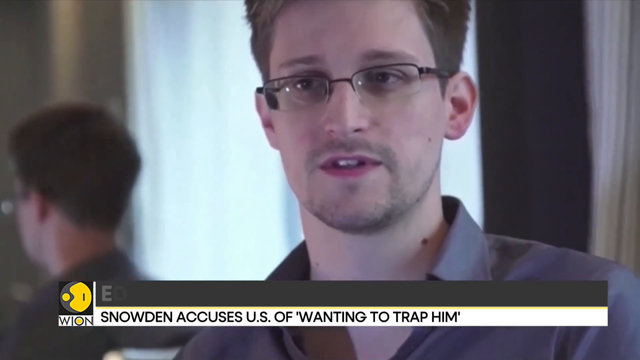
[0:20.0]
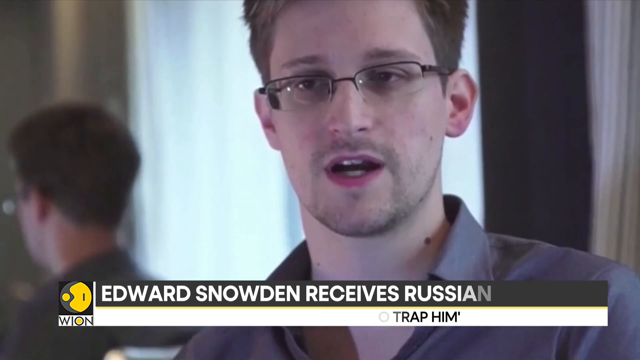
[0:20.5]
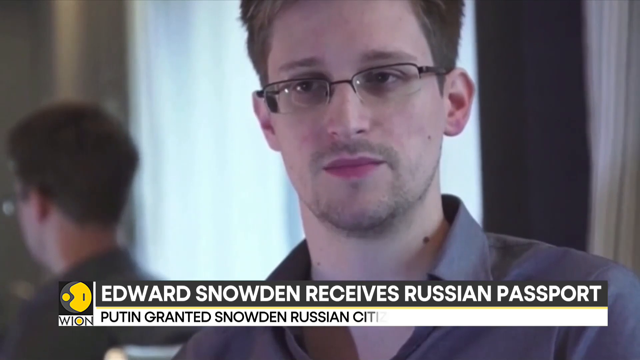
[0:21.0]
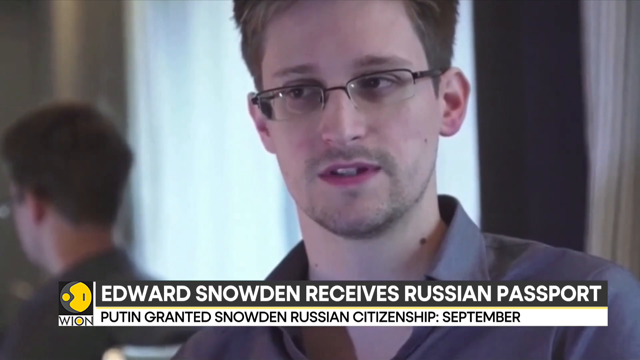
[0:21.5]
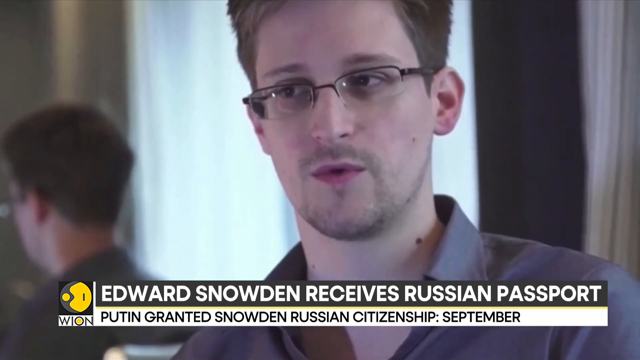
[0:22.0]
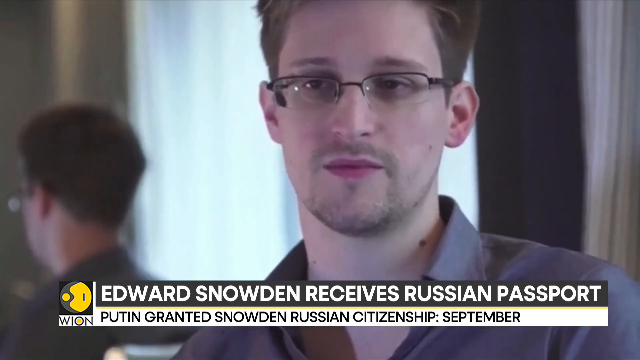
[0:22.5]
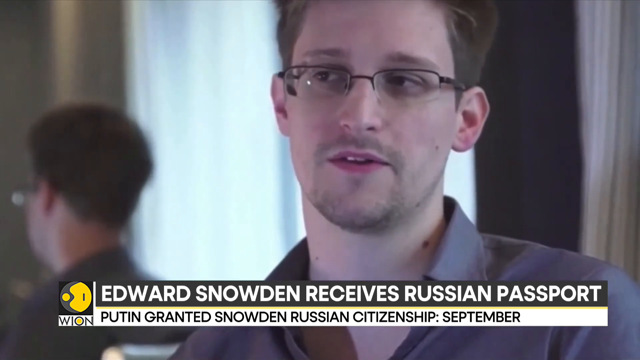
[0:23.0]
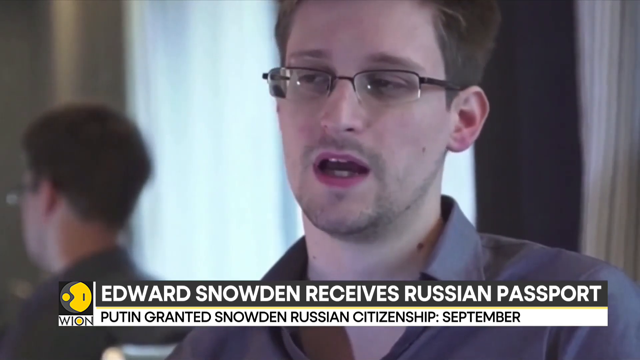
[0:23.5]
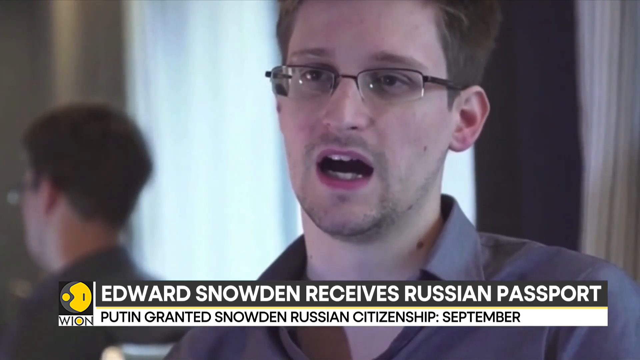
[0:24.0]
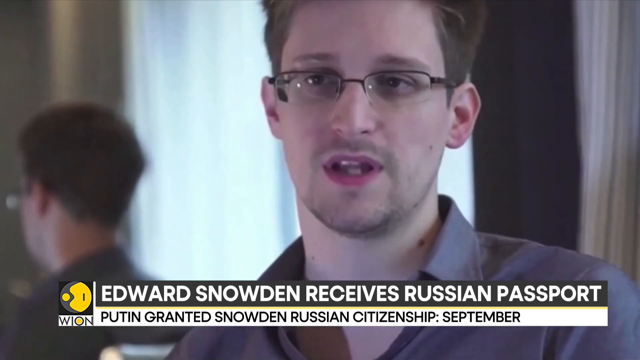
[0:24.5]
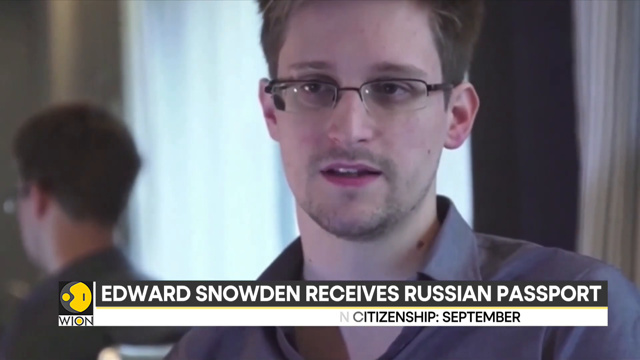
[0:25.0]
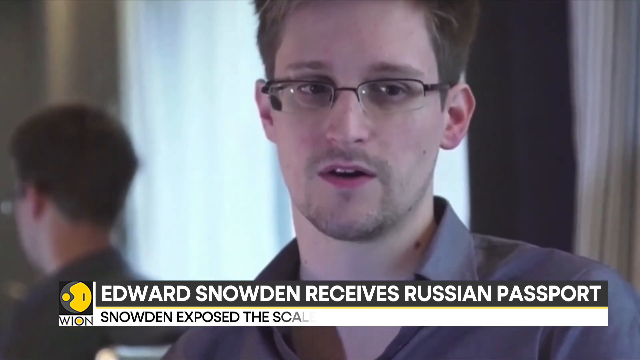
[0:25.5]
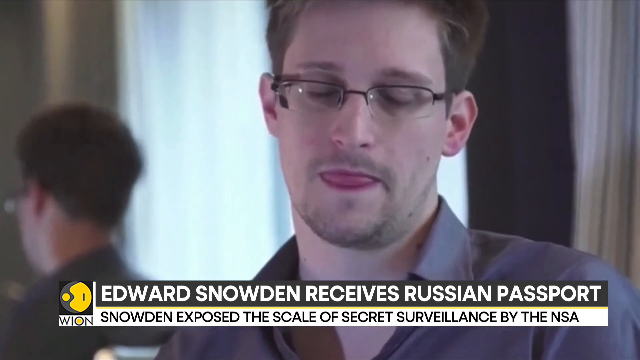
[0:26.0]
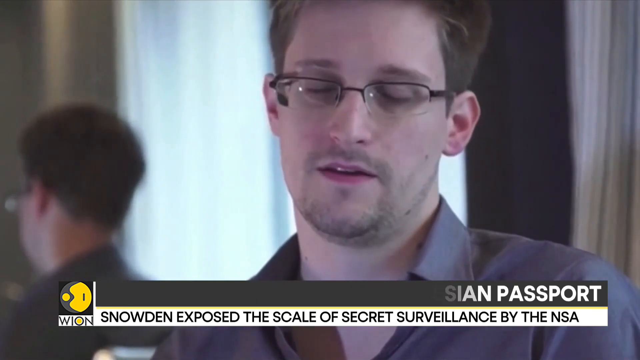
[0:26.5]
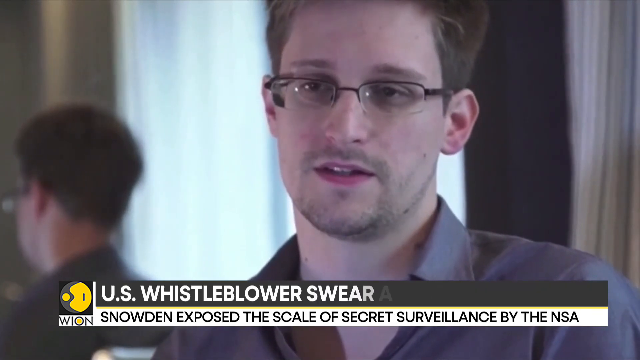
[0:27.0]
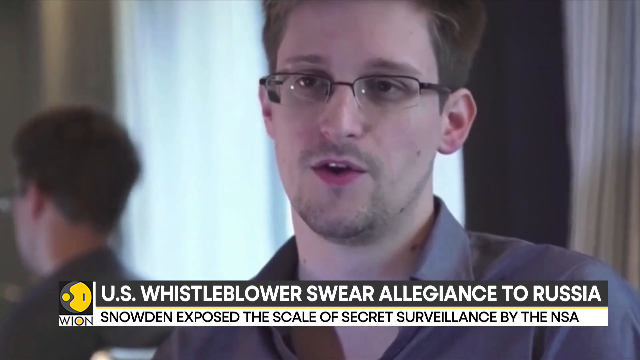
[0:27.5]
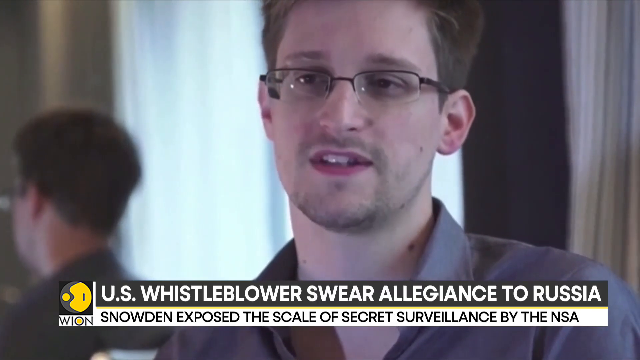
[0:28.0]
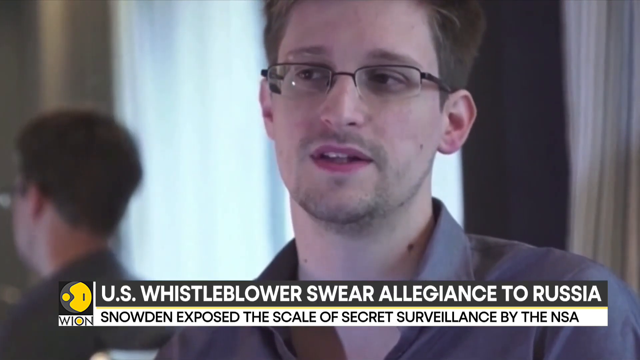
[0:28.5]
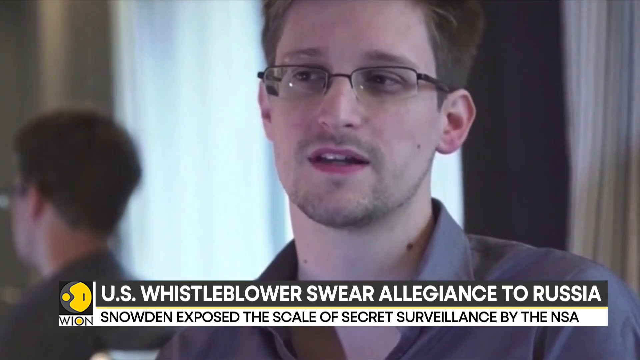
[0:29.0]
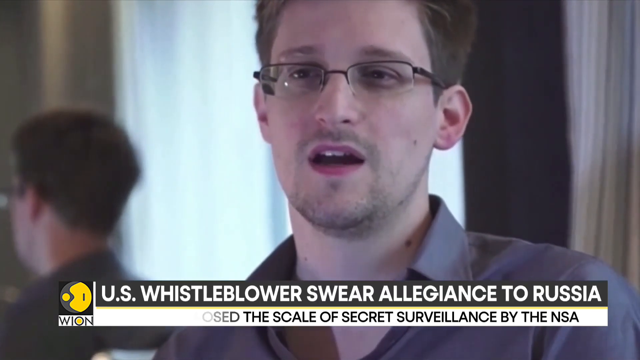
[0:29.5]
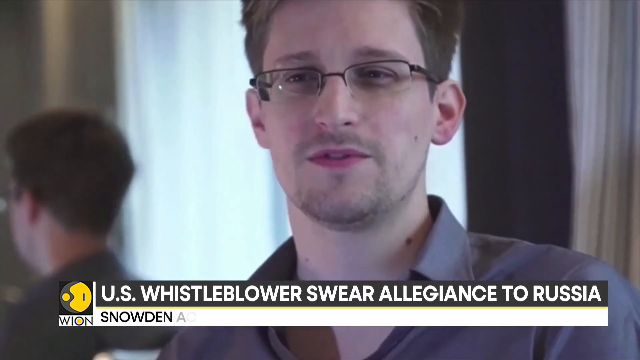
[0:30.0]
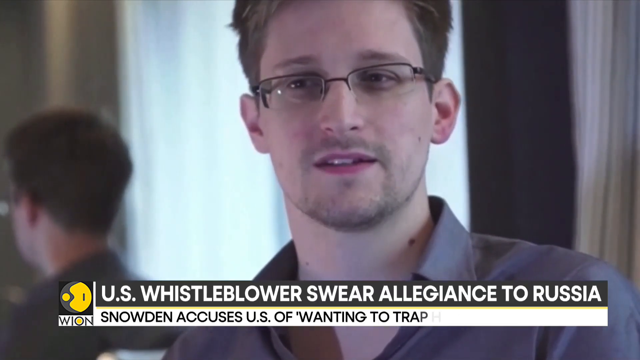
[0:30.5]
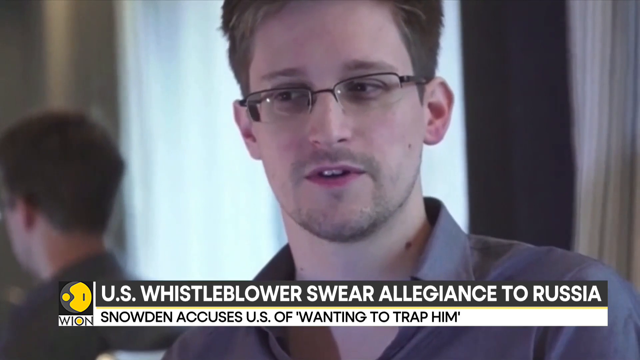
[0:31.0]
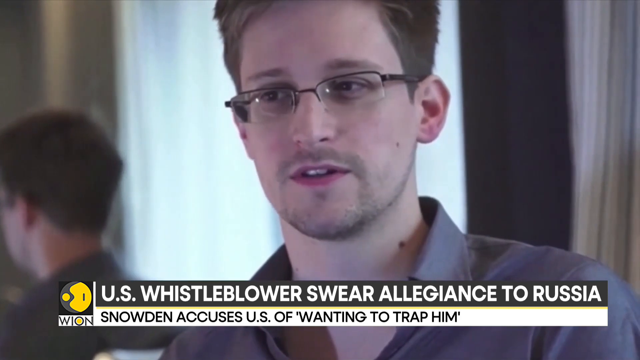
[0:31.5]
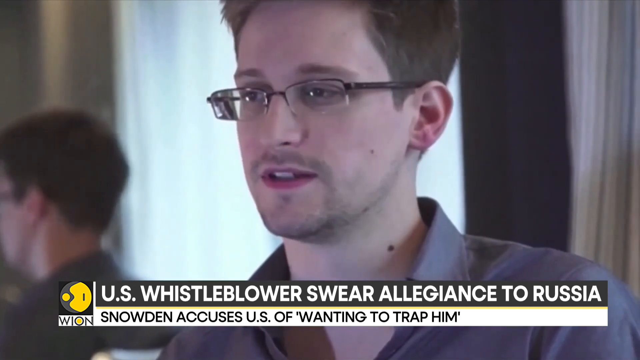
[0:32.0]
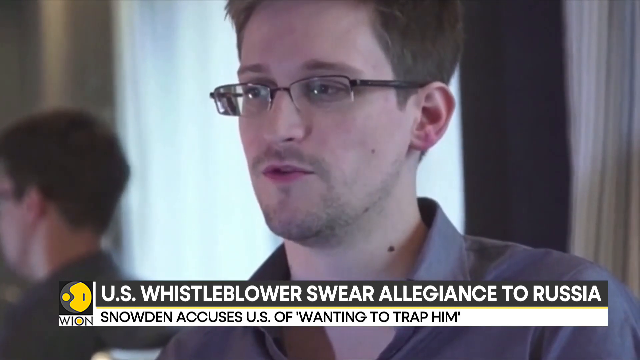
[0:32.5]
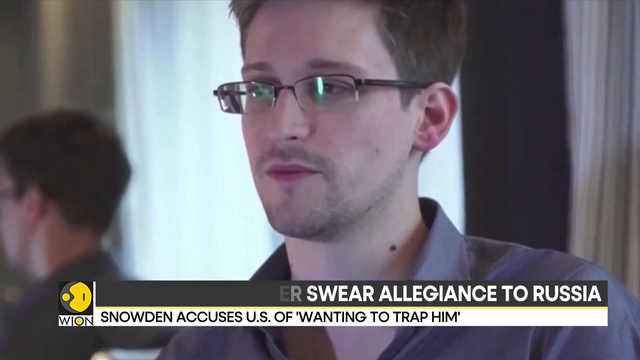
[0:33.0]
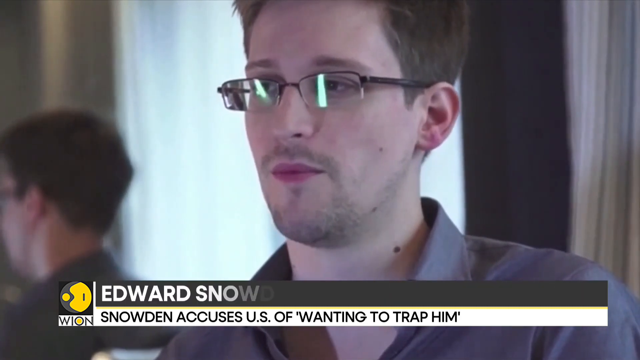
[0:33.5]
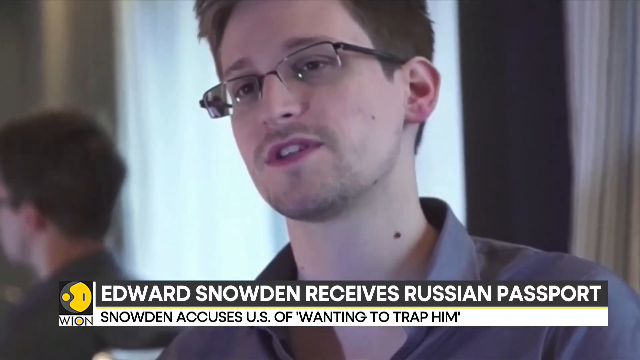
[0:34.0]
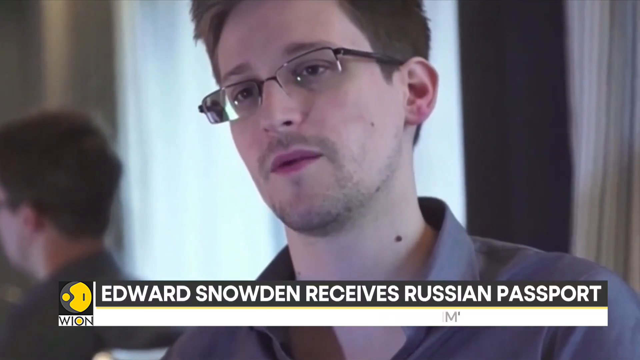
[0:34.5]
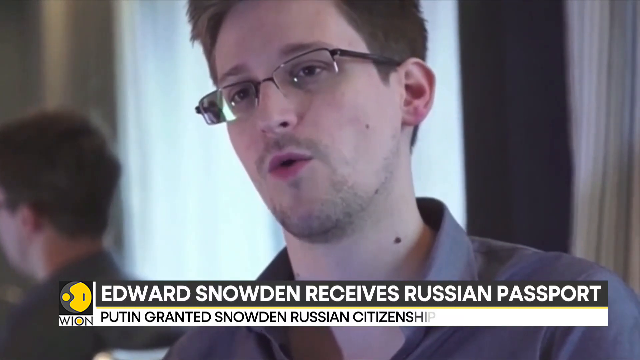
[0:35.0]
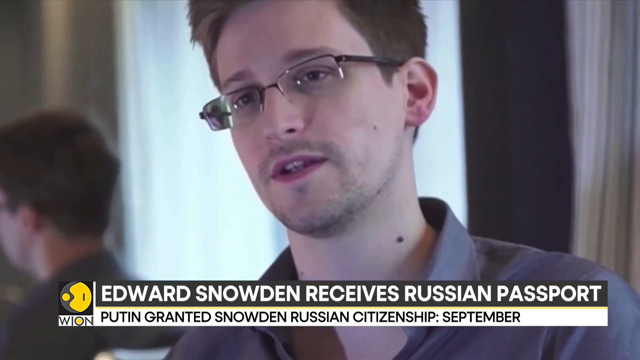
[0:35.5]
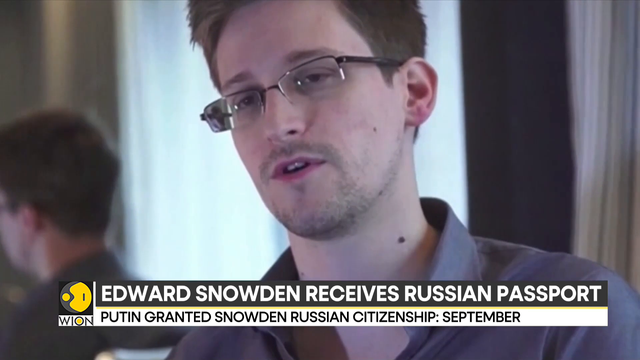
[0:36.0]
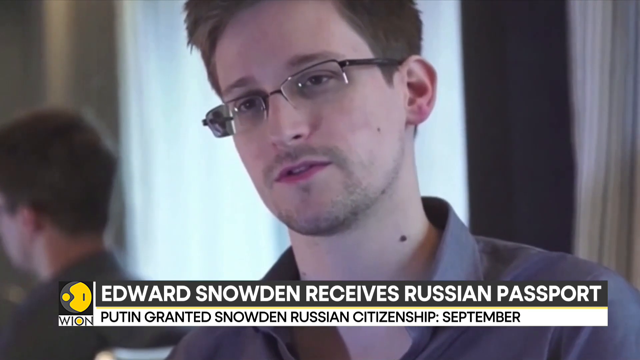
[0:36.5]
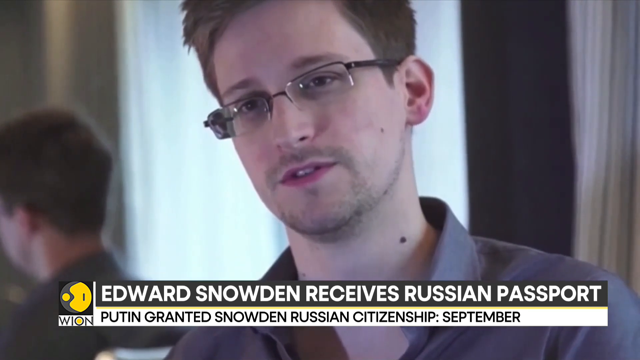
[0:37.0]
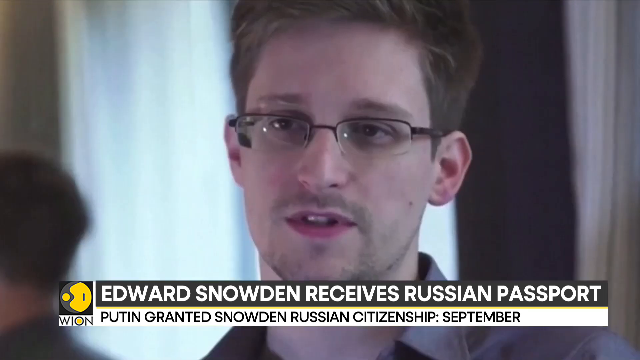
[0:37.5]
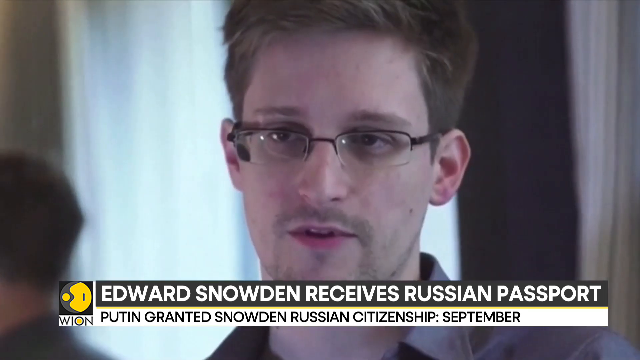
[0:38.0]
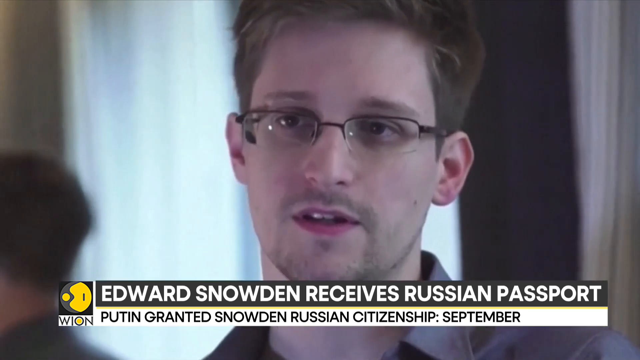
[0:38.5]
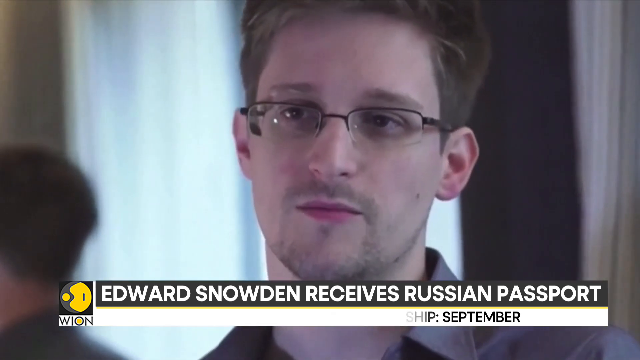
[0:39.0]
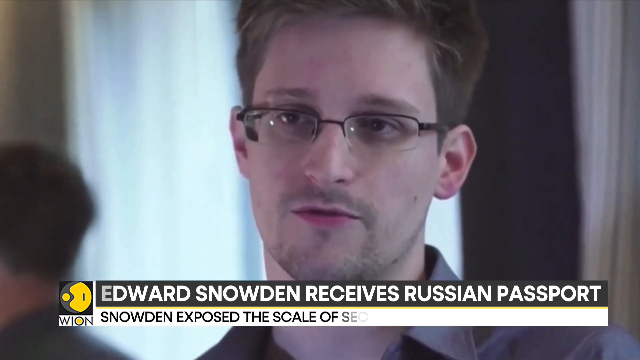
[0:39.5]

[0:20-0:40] Edward Snowden talks while facing the camera; the back of his head is also visible, so he is apparently in front of a mirror. He appears very young, with short, badly cropped hair, rimless glasses and a stubble beard, and he wears a grey shirt. The image is grey and not very colorful, though not black and white. He talks throughout. Headlines run repeatedly along the bottom of the screen: "U.S. whistleblower swear allegiance to Russia," "Edward Snowden receives Russian passport," "Snowden exposed the scale of secret surveillance by the NSA," "Snowden accuses the U.S. of trying to trap him" and "Putin granted Snowden Russian citizenship."